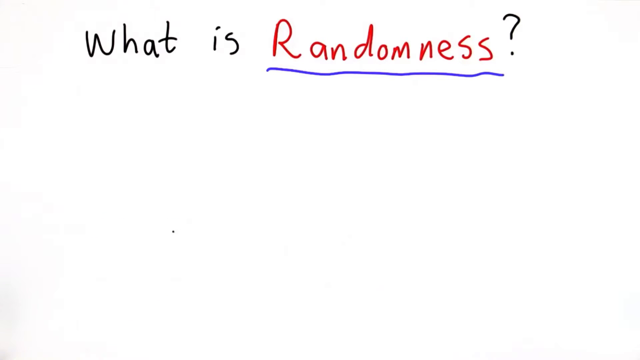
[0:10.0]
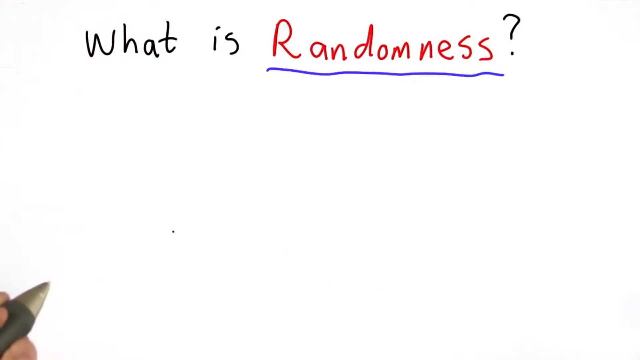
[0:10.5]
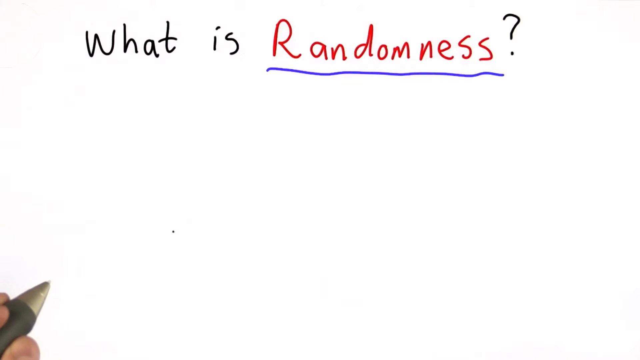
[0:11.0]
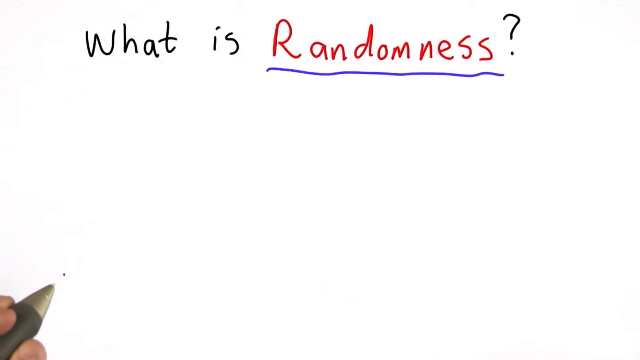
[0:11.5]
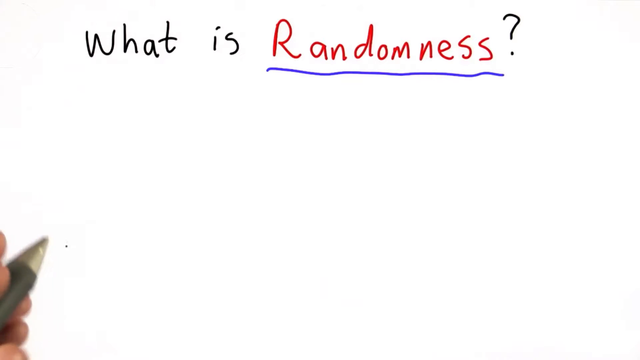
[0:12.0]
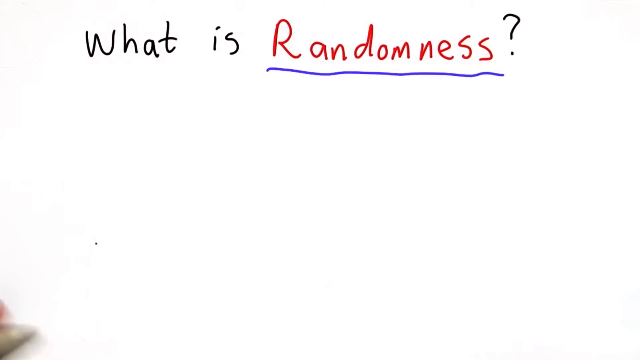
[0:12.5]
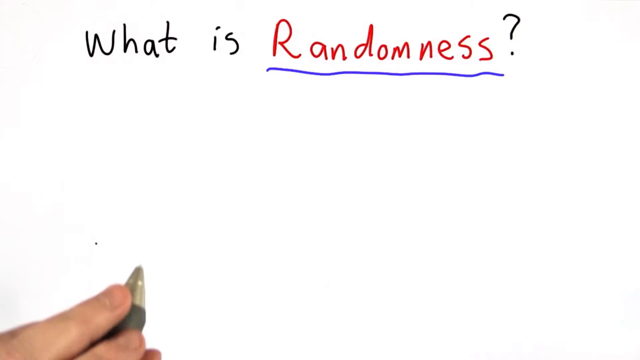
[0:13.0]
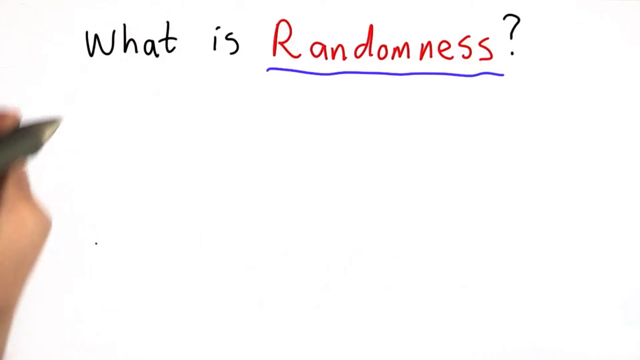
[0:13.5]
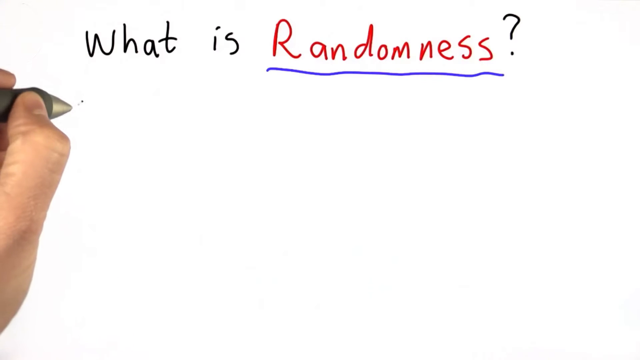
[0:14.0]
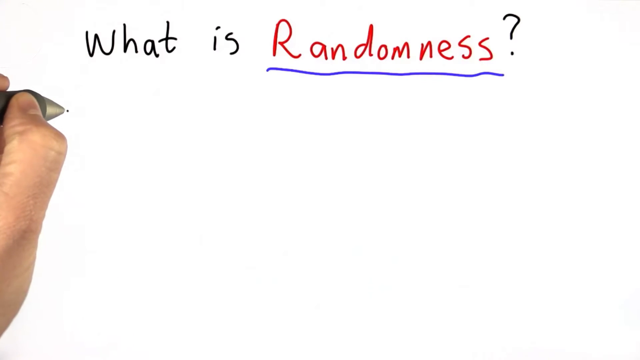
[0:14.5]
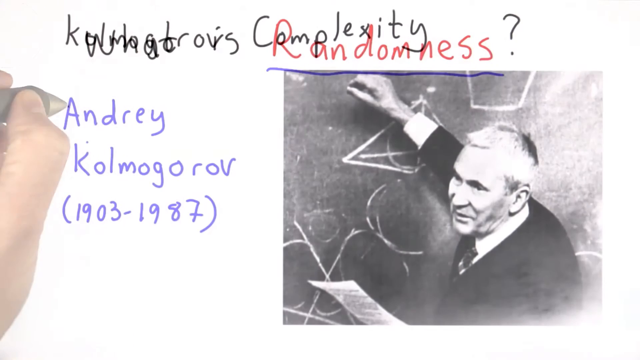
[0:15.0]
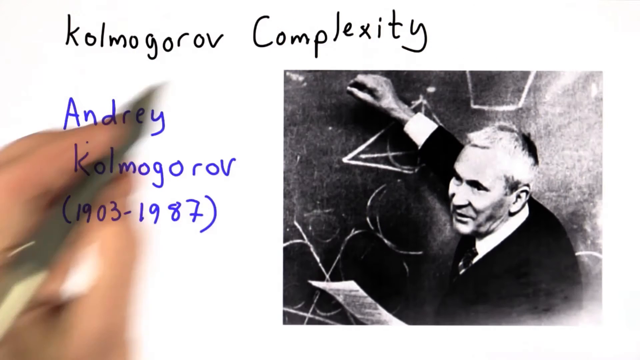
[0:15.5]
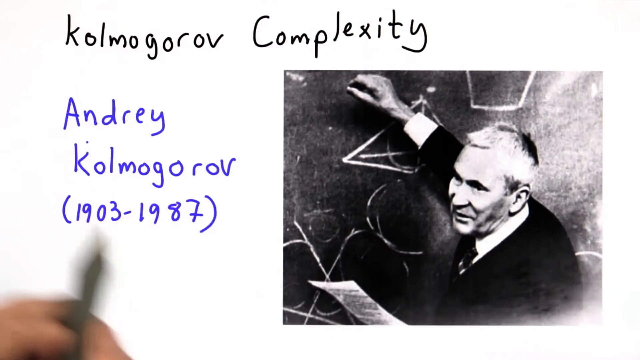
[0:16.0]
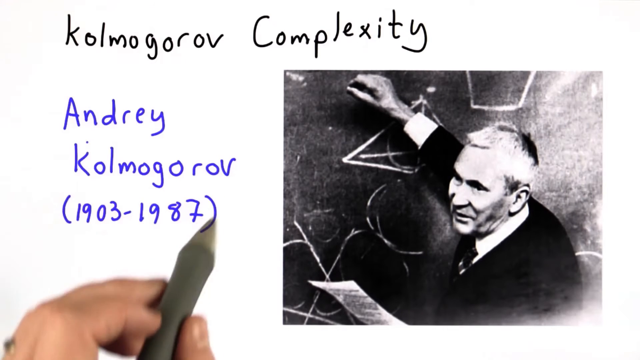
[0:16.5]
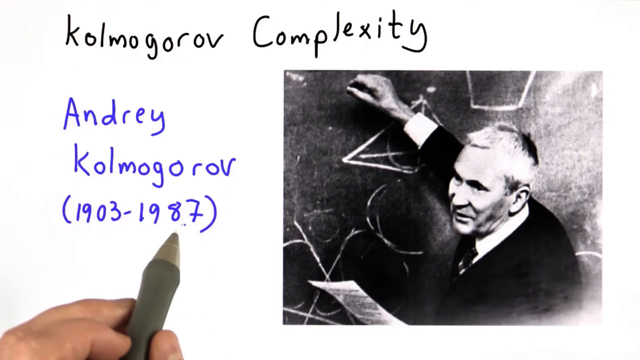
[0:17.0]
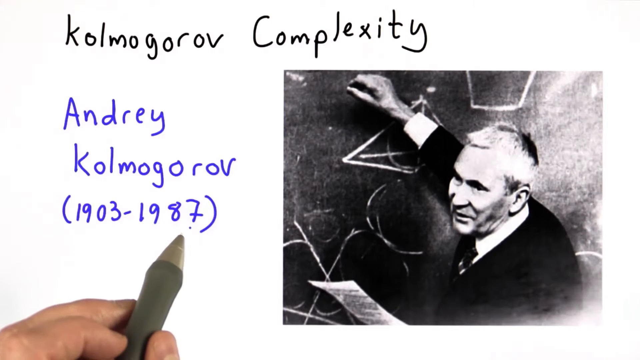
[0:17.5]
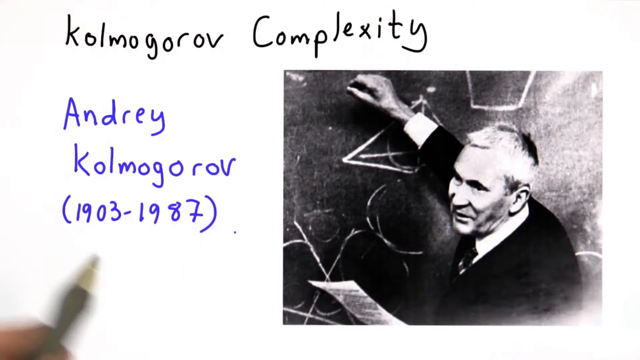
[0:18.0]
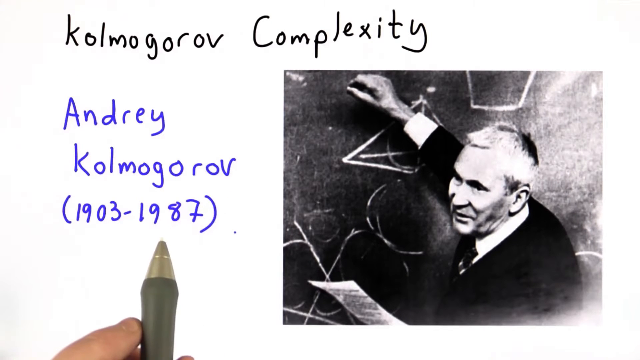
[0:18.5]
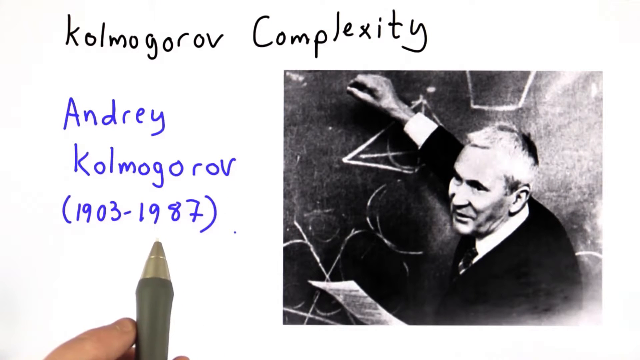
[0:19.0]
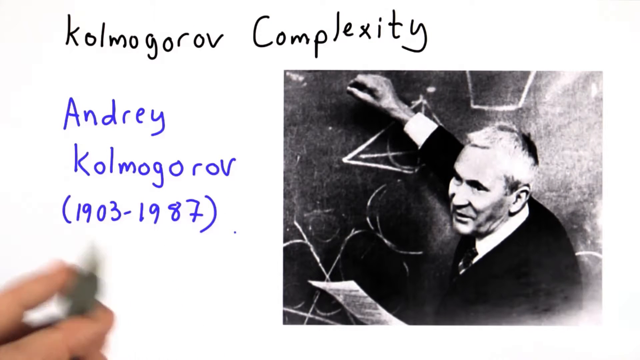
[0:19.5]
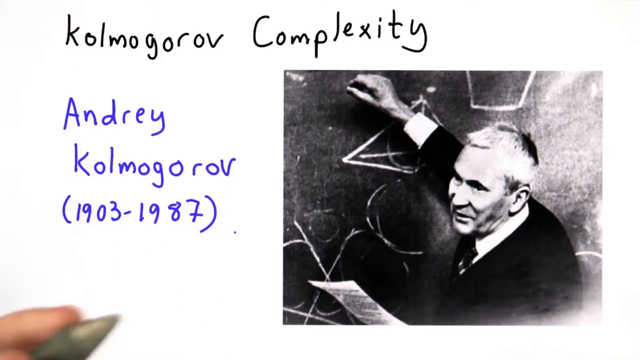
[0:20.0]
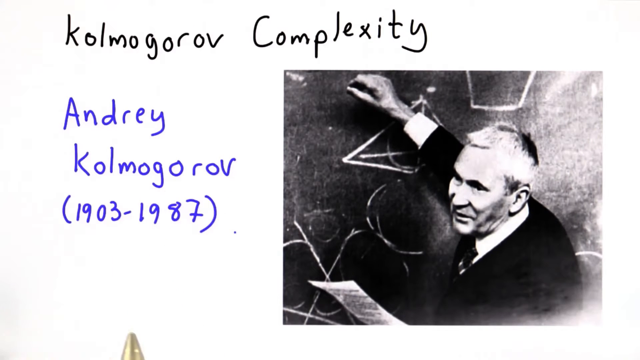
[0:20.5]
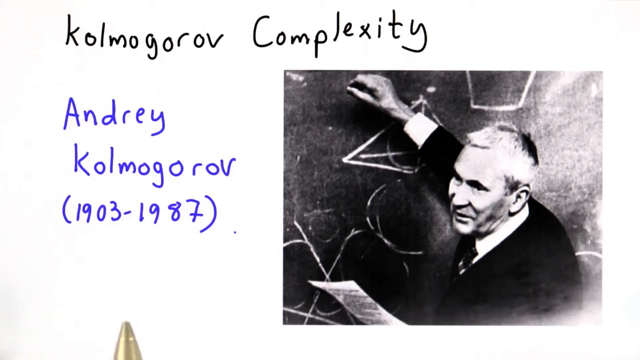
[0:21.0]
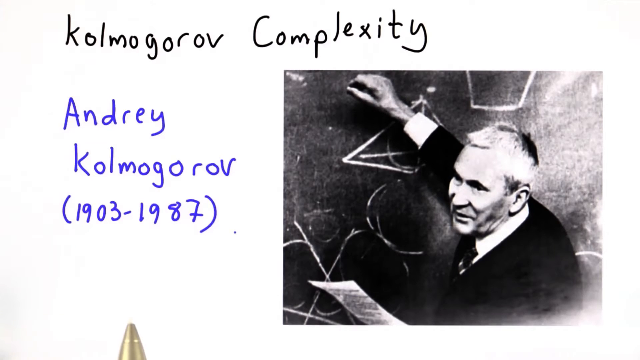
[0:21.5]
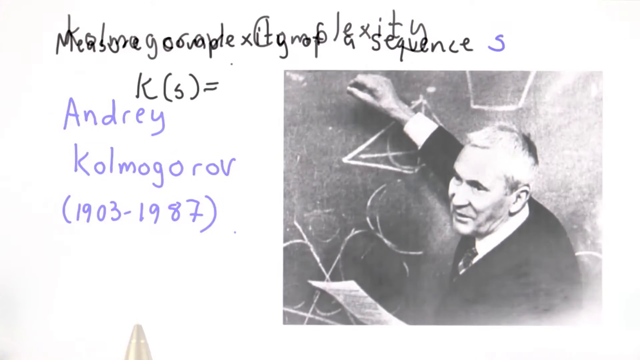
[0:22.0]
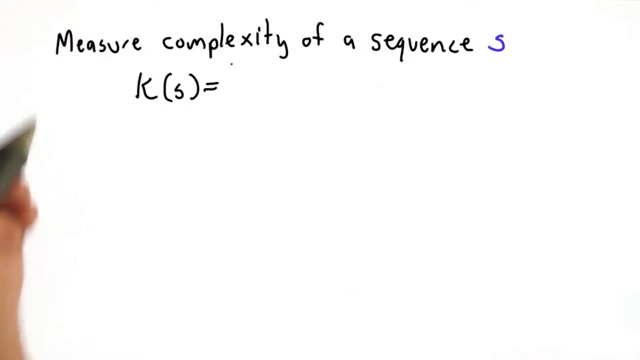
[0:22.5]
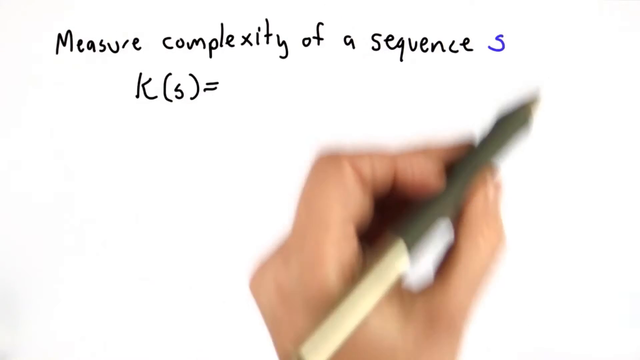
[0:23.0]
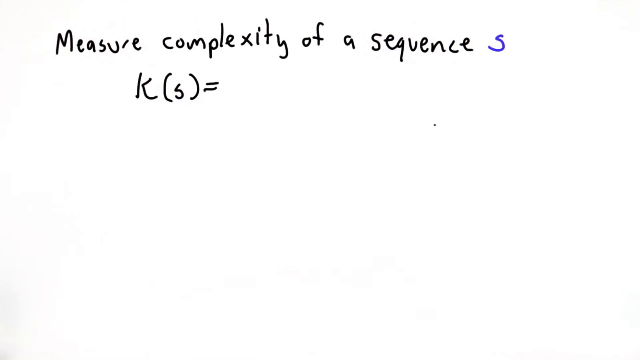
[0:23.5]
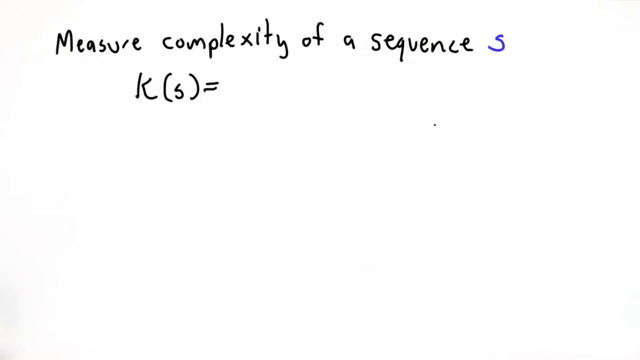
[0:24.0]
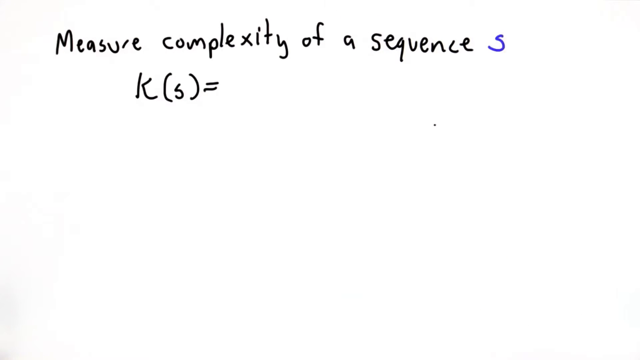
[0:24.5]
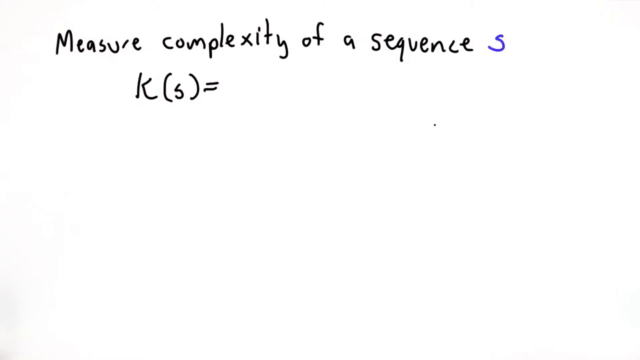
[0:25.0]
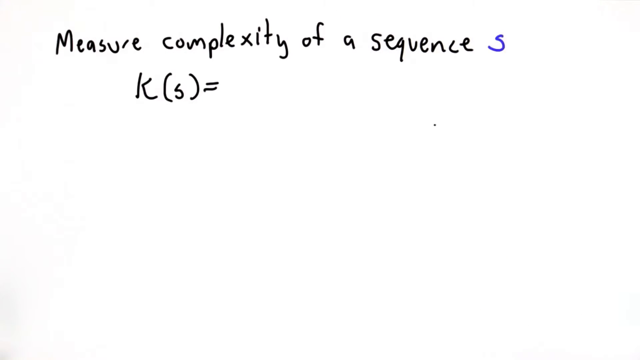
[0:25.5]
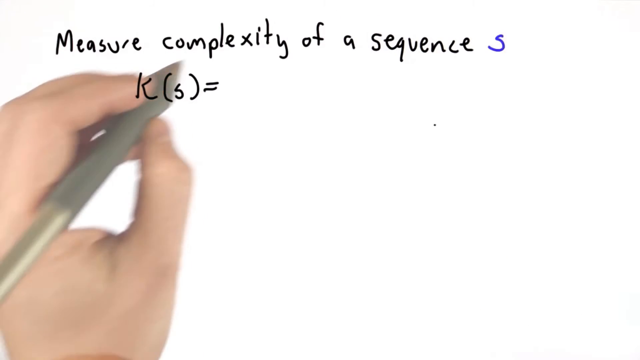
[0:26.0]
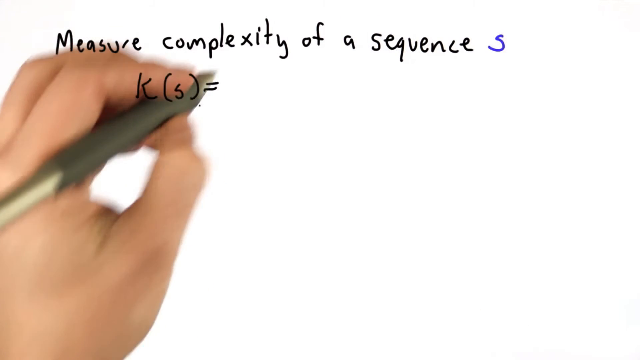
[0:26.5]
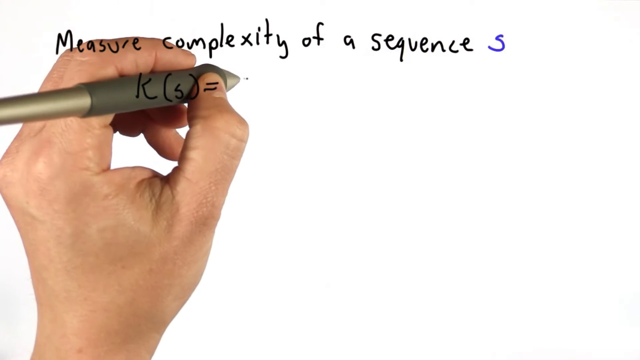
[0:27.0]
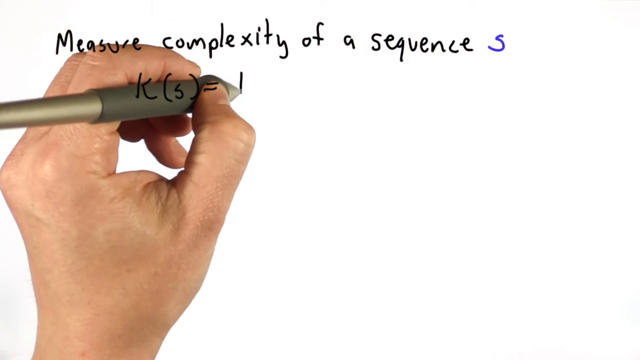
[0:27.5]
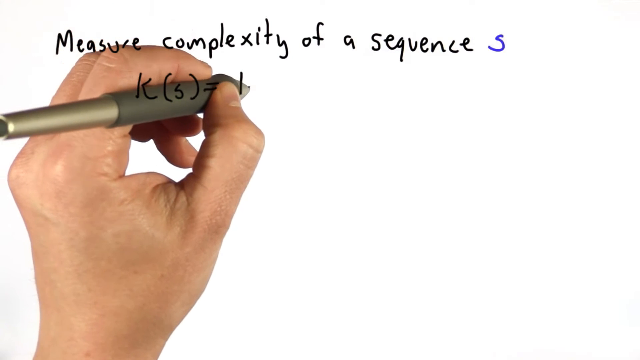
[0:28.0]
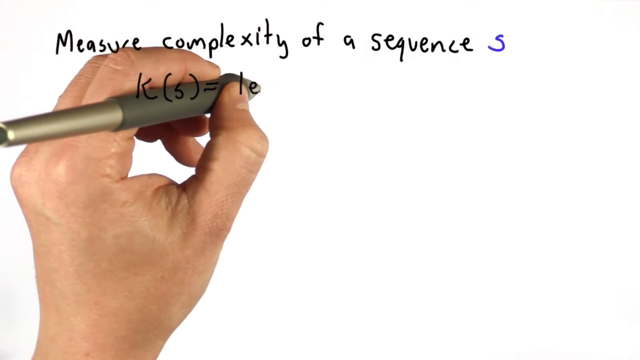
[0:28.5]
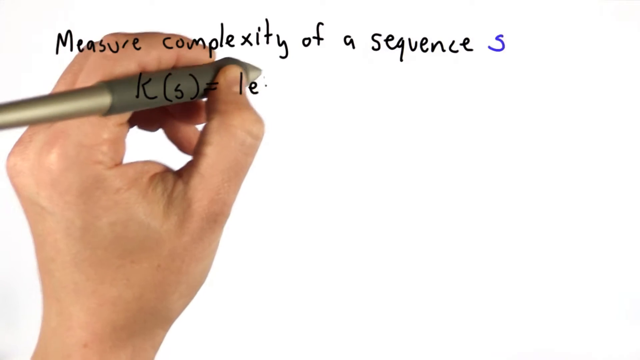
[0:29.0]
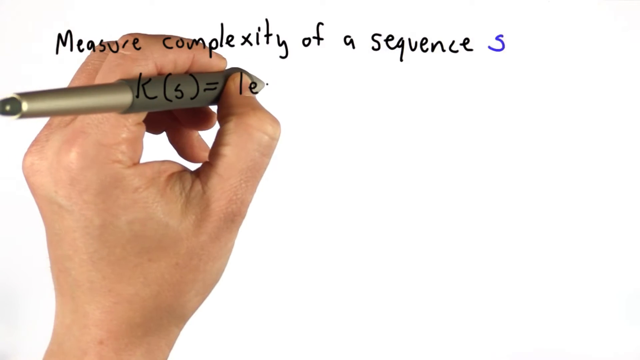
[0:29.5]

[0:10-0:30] On the white screen, "what is" is written in black across the top, followed by "randomness" in red with a blue underline and a black question mark. A left hand comes into the picture holding a gold-colored pen up against the screen, and wherever he touches the screen there is a small dot. He touches the screen and it changes to a different screen: at the top, written in black, is "Kolmogorov Complexity," and underneath in blue is "Andre Kolmogorov" with "(1903 1987)" in parentheses. To the right is an old black-and-white picture of a man with gray hair wearing a black suit, a white collared shirt and a black tie, standing in front of a chalkboard. His right hand is raised above his head on the chalkboard, and in front of him on the chalkboard are designs of rectangles and some circles. The hand holding the pen points out the date. Then the screen goes white again, and at the top it says "measure complexity of a sequence."